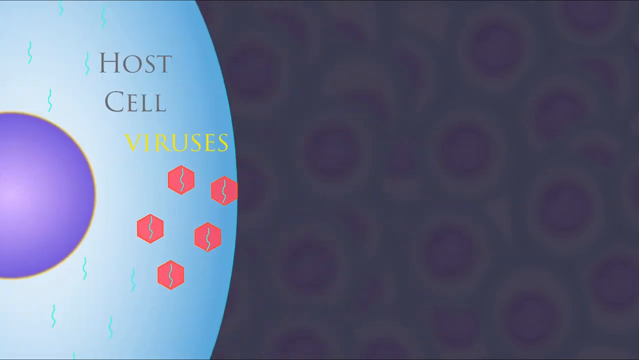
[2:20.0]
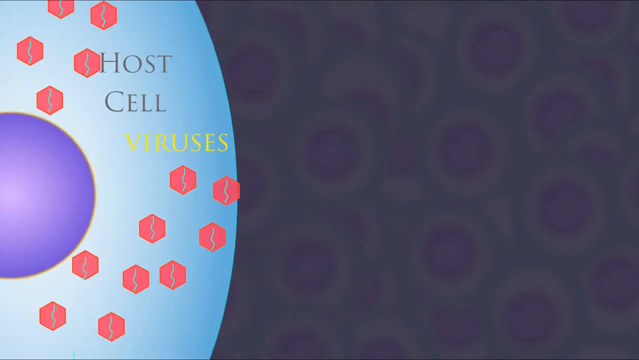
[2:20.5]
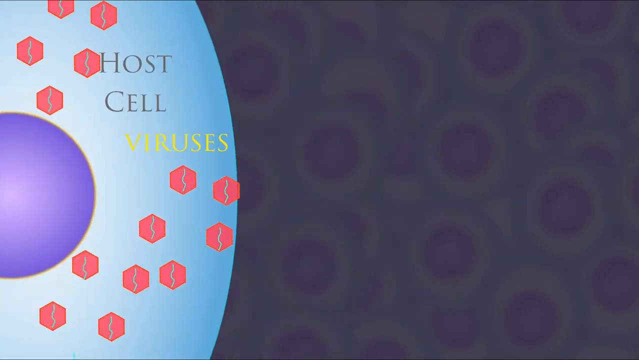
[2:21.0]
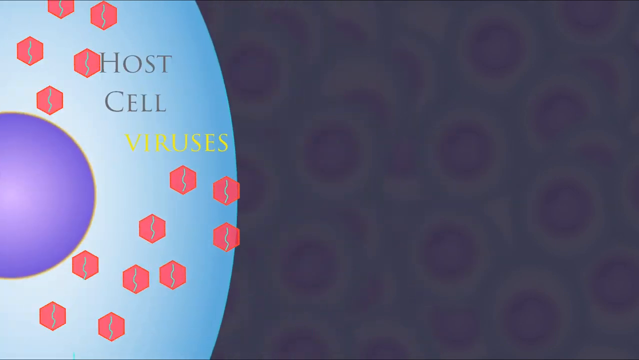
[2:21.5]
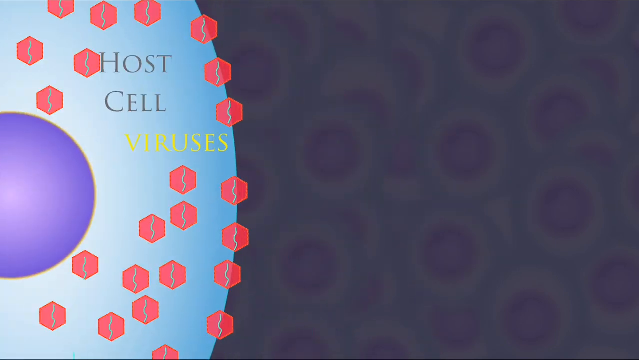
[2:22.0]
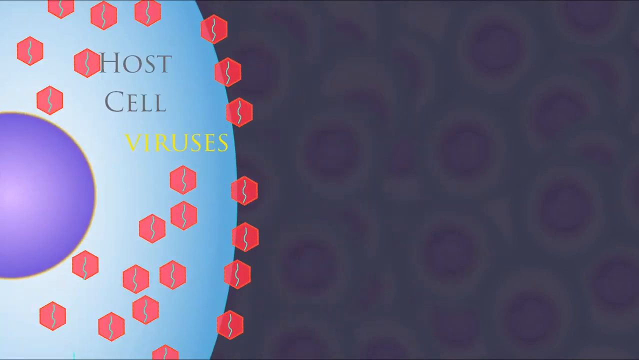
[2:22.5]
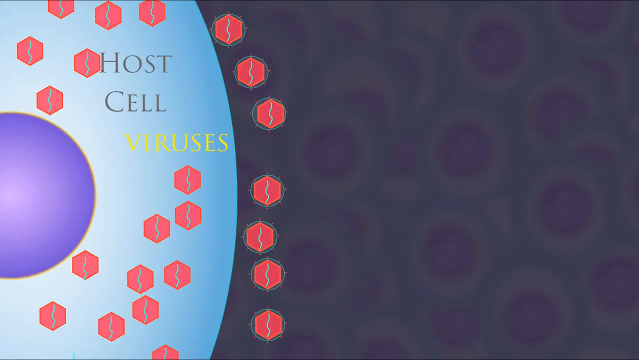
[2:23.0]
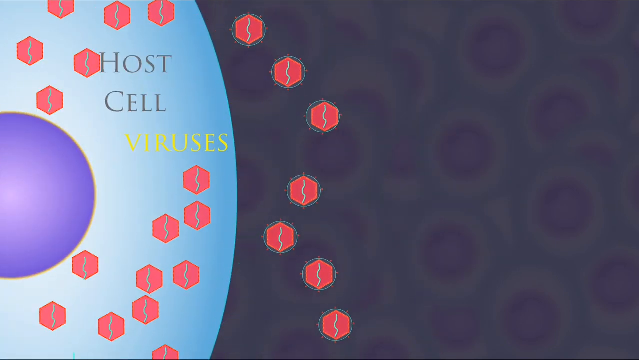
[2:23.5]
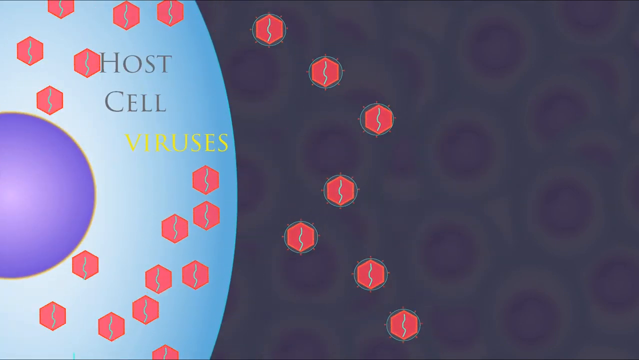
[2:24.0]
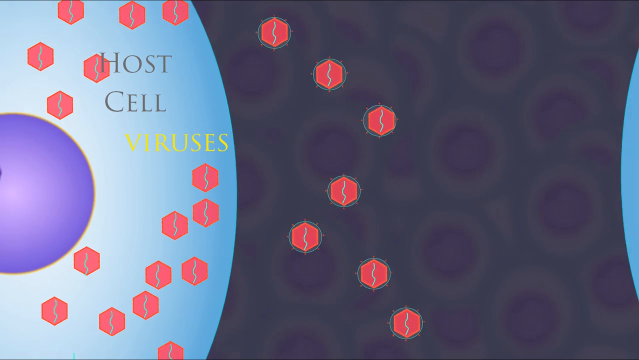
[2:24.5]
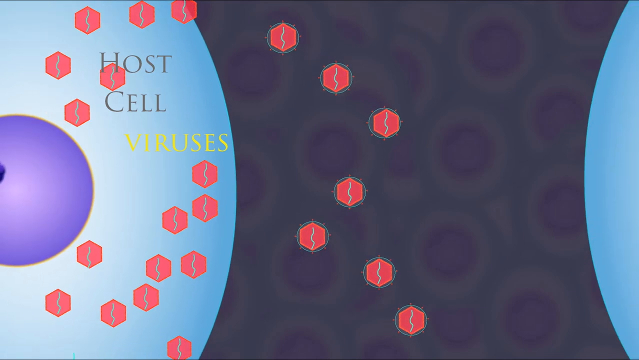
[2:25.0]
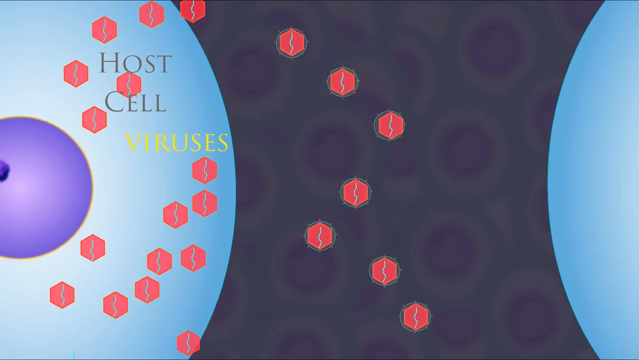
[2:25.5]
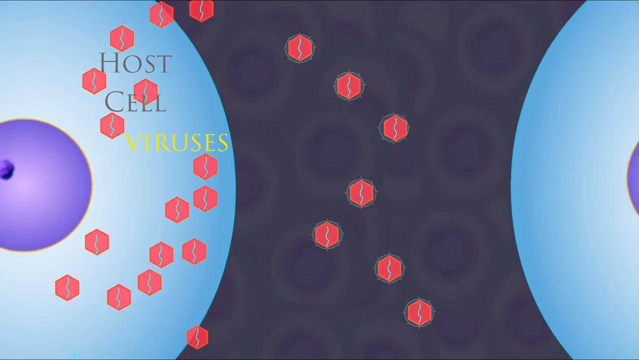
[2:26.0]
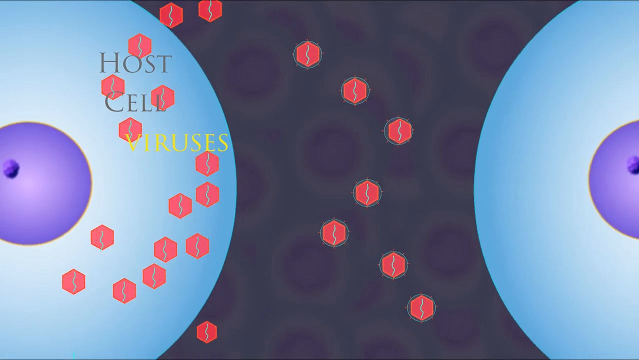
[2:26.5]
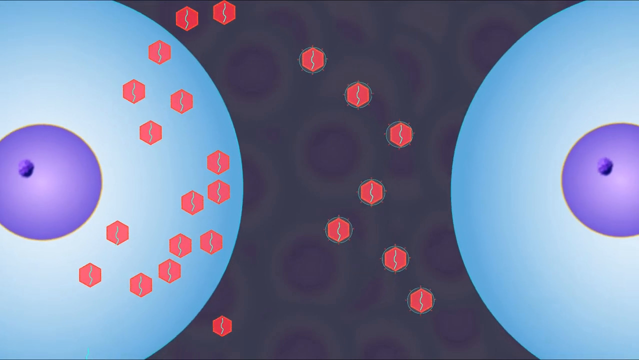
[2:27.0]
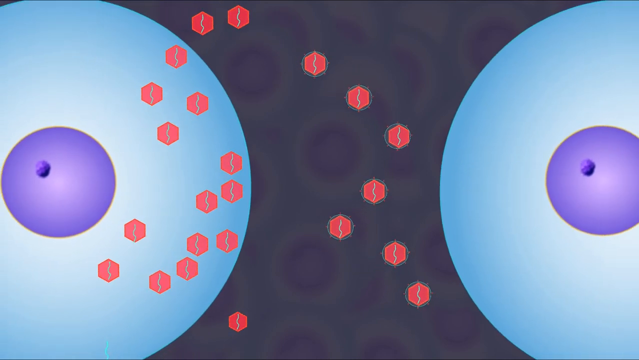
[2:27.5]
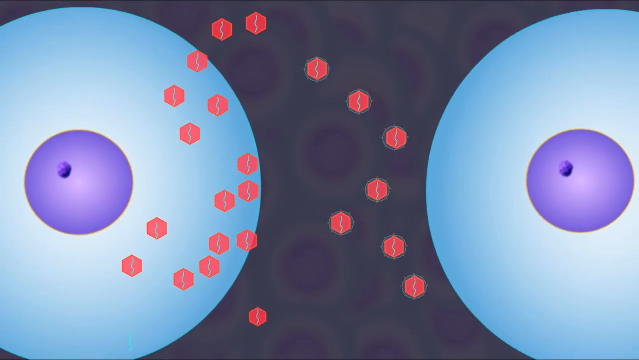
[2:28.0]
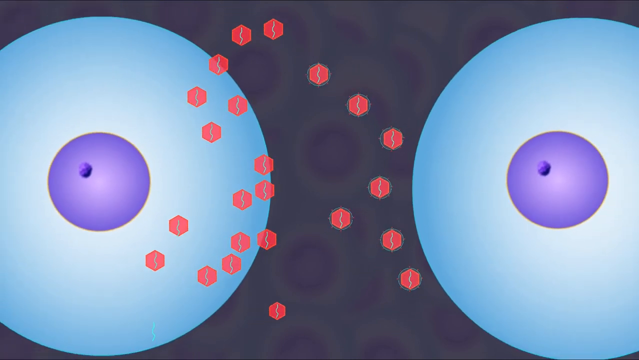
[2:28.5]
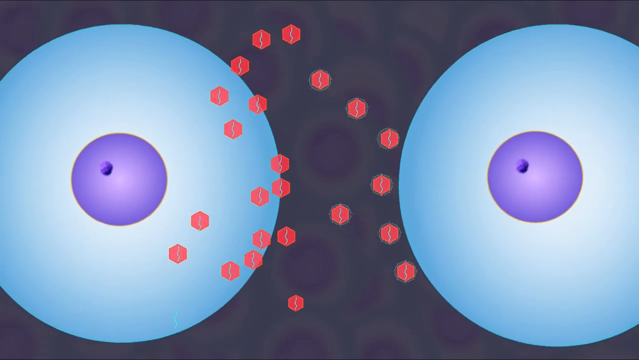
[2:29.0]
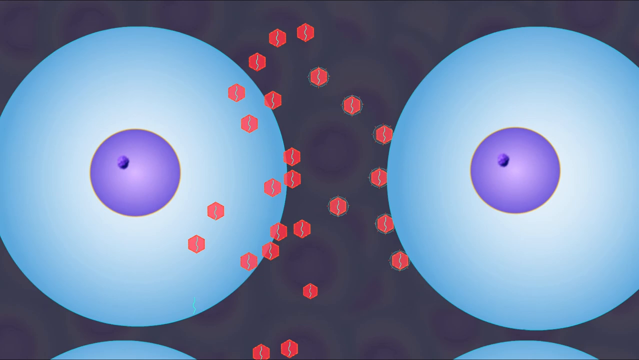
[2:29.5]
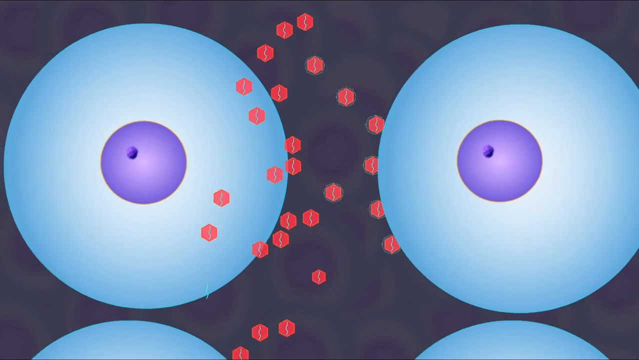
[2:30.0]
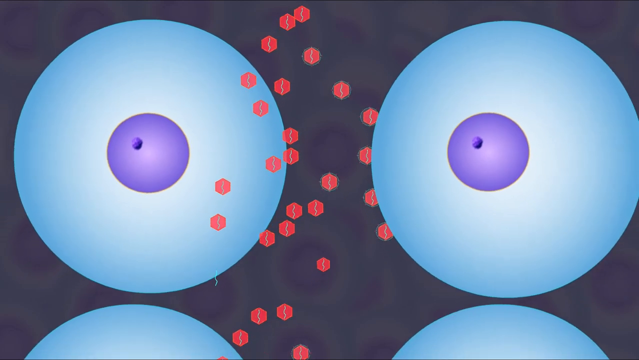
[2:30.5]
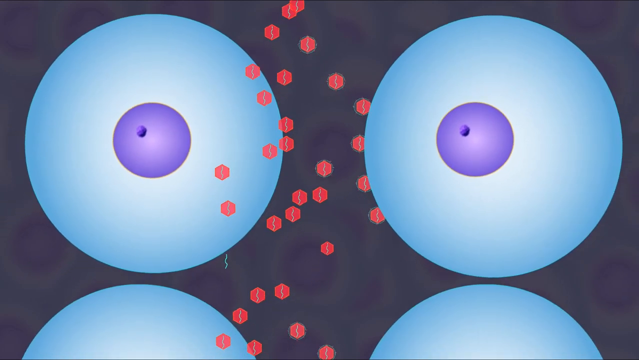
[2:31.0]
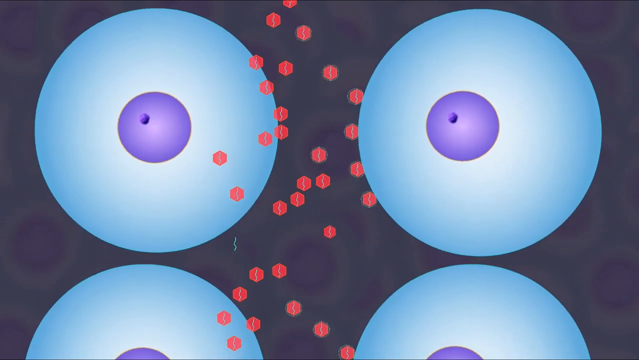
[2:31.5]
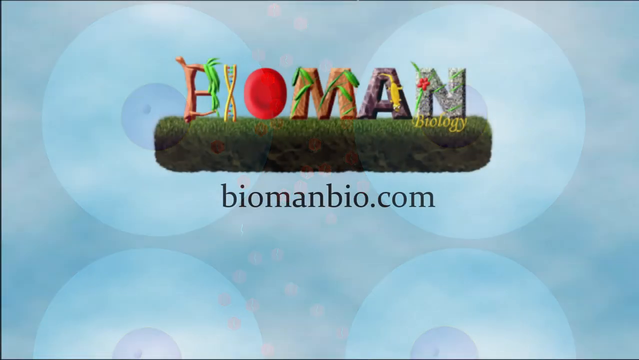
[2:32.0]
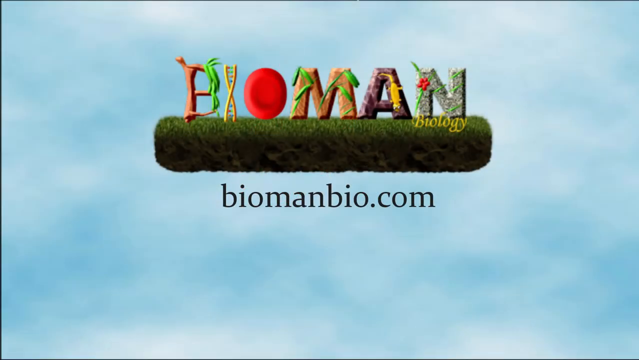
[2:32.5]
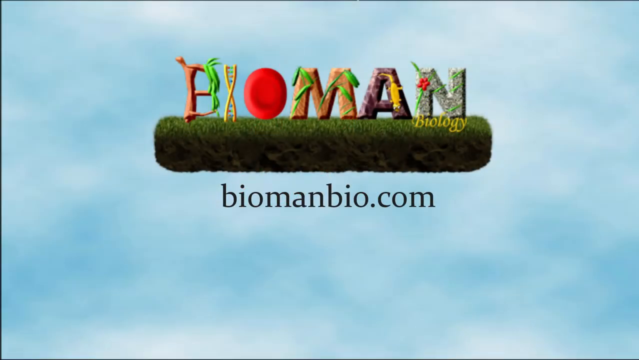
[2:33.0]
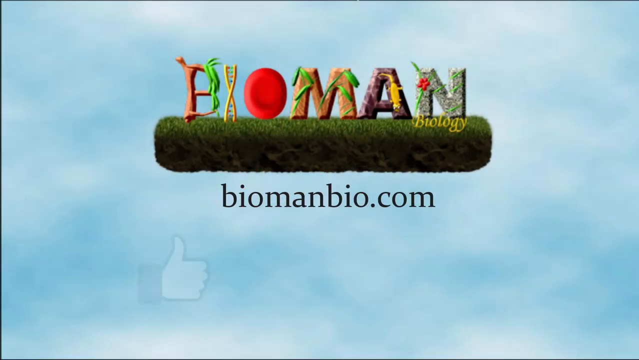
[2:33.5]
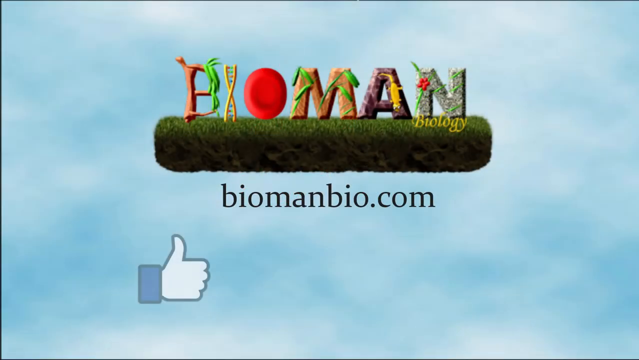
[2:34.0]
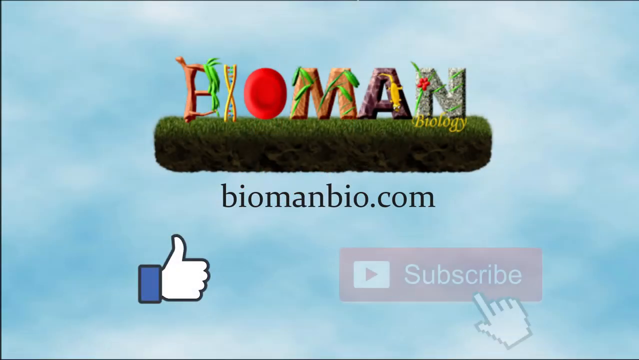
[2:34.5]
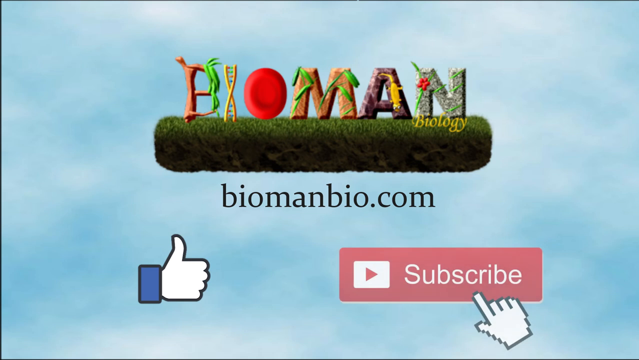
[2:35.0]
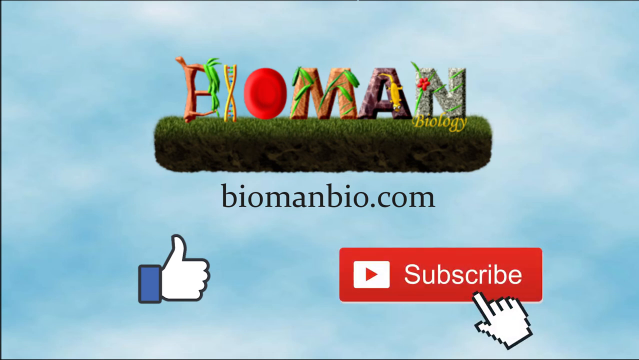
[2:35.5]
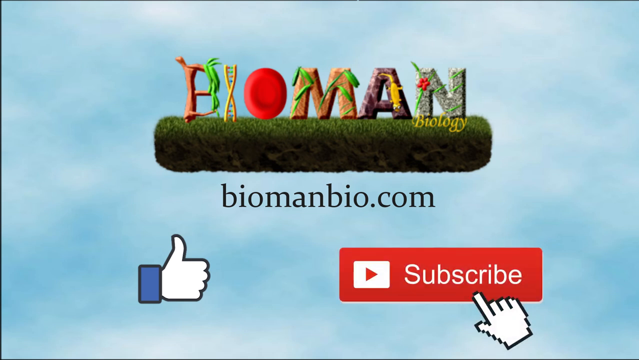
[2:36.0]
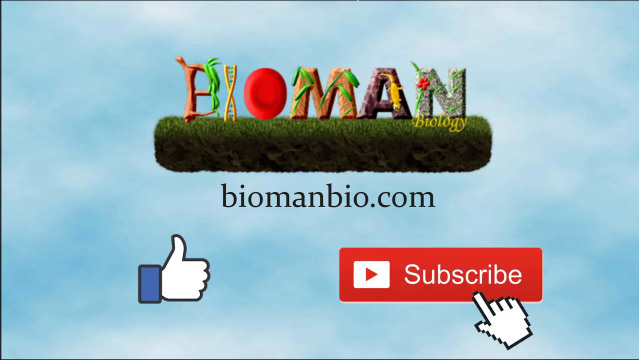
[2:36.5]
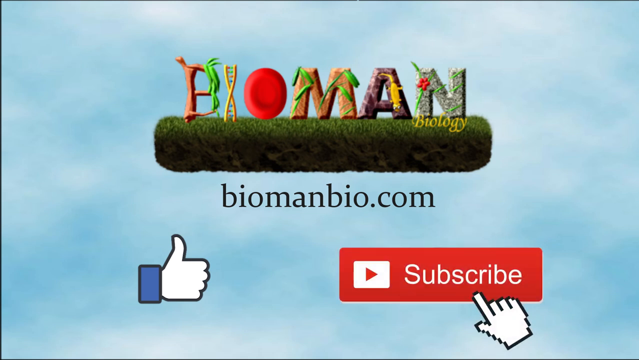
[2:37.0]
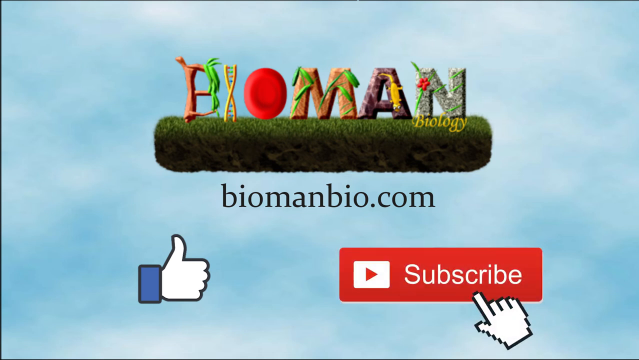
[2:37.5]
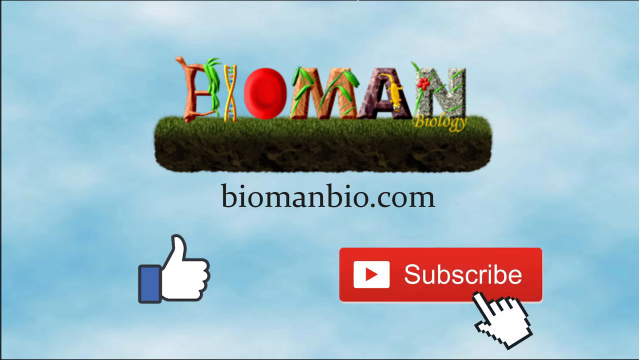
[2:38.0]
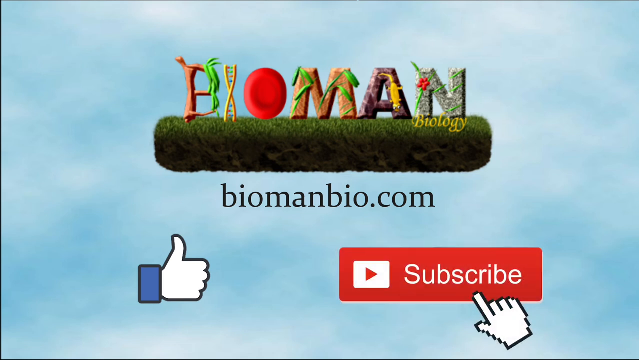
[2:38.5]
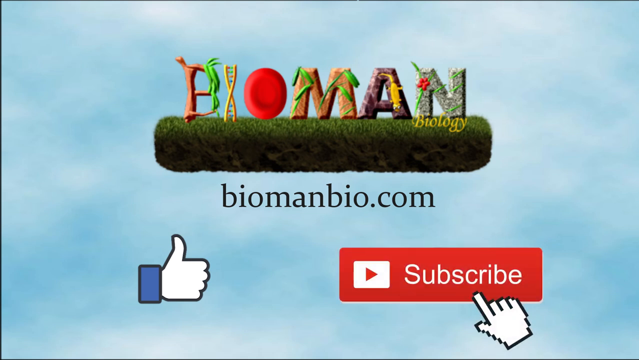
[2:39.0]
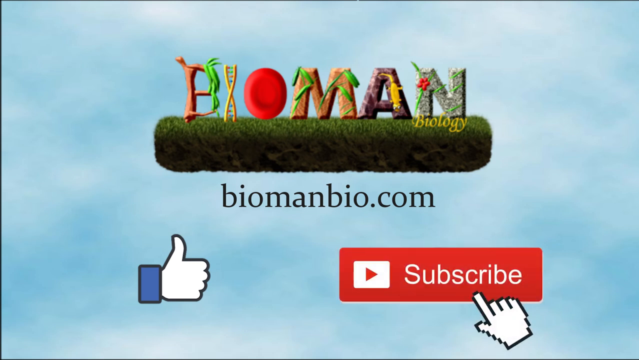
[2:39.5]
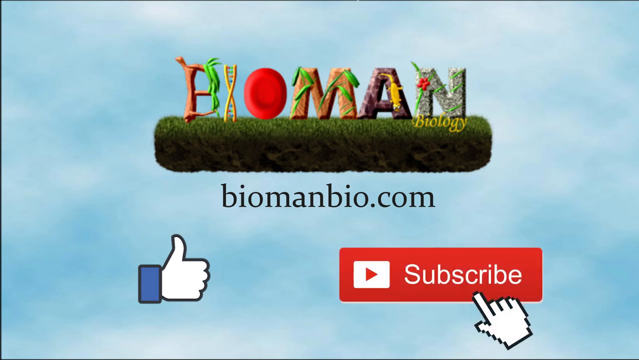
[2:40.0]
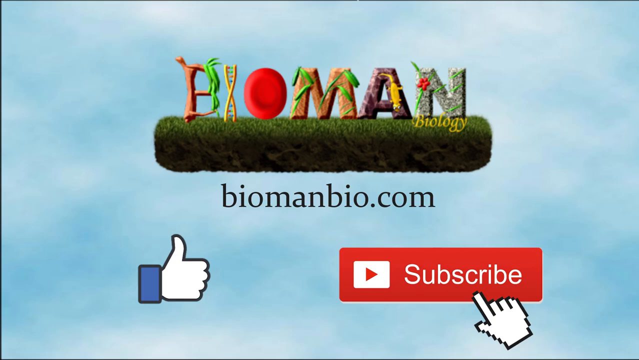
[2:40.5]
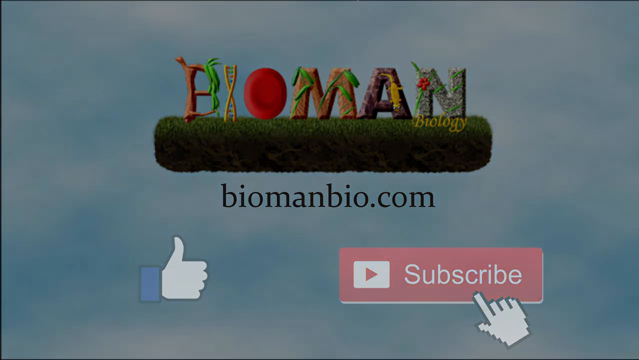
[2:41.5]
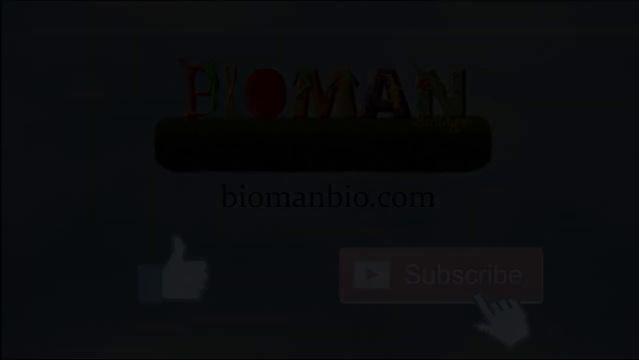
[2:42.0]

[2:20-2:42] The host cell appears with red viruses attached to it; the host cell is purple in the center. As the viruses attach to the host cell they replicate, some of them die and become weaker, and others detach from the host cell and attach to other host cells. The final screen shows the logo of a biology channel in the middle with its website link listed underneath, a thumbs up button in the lower left, and a red subscribe button in the lower right.